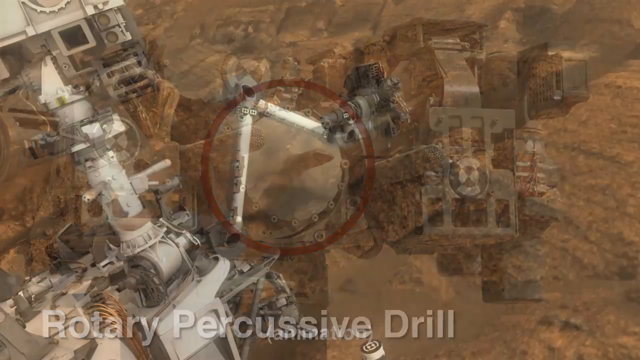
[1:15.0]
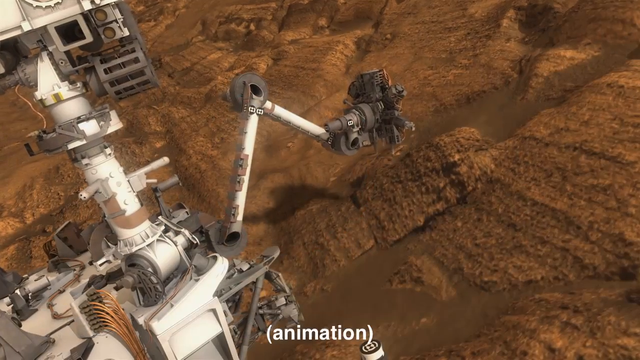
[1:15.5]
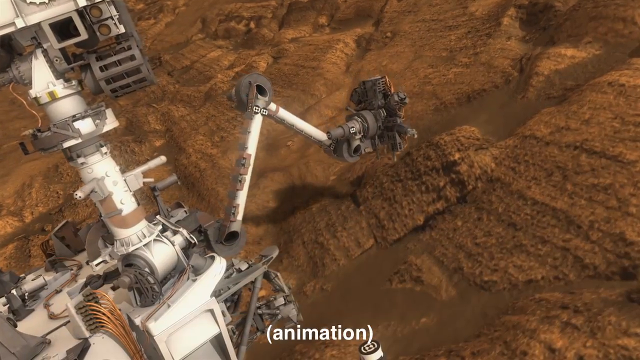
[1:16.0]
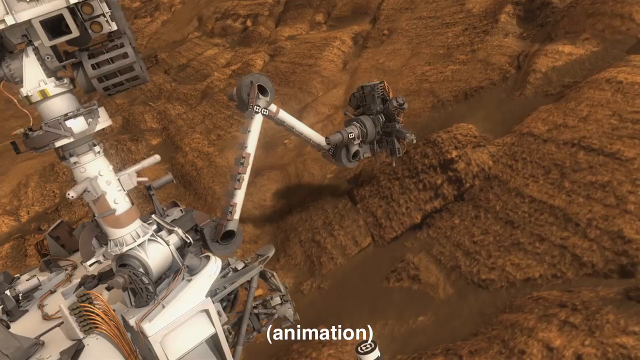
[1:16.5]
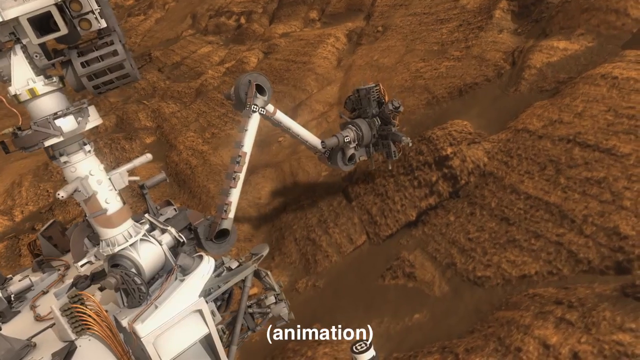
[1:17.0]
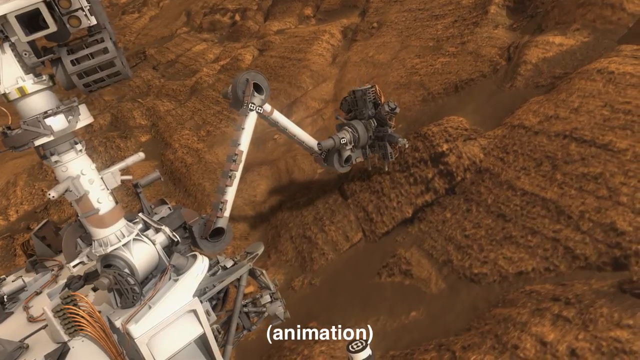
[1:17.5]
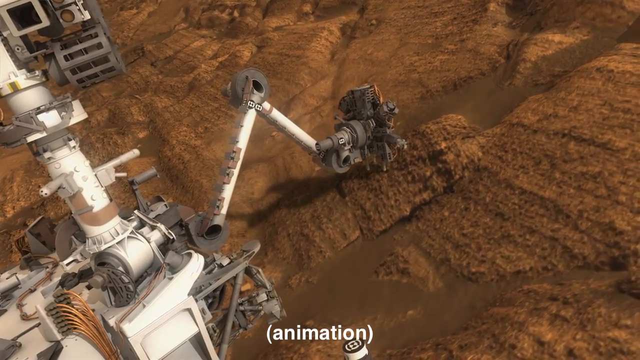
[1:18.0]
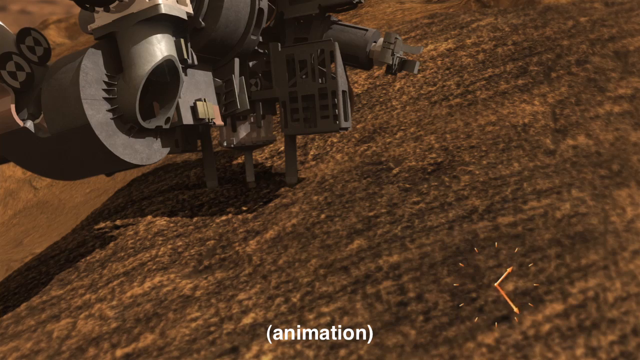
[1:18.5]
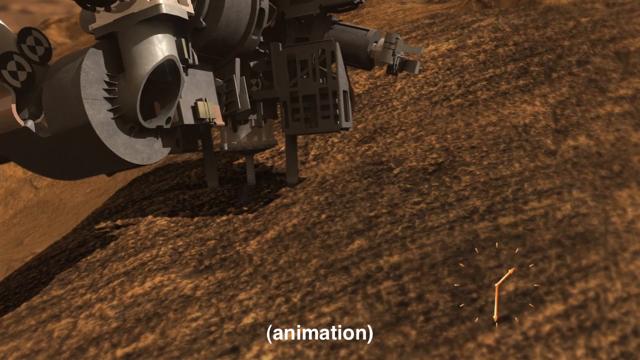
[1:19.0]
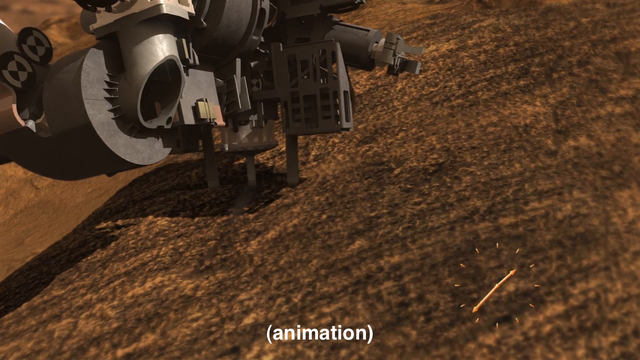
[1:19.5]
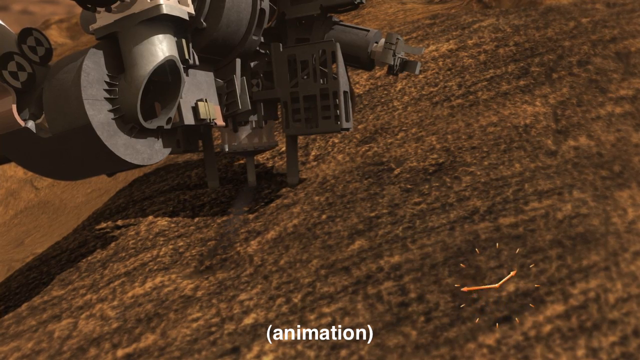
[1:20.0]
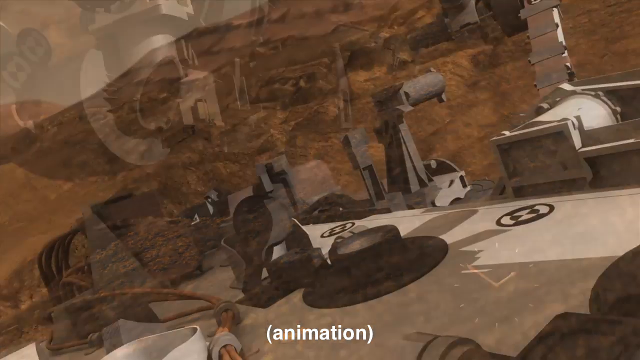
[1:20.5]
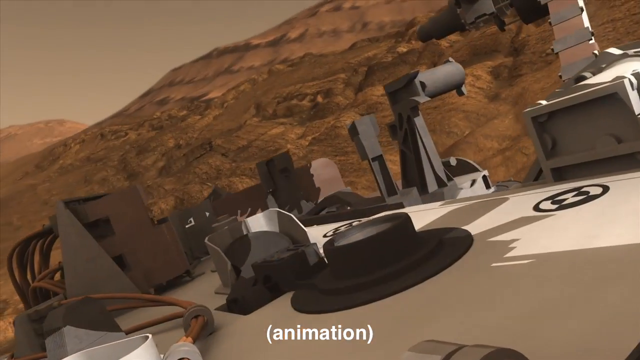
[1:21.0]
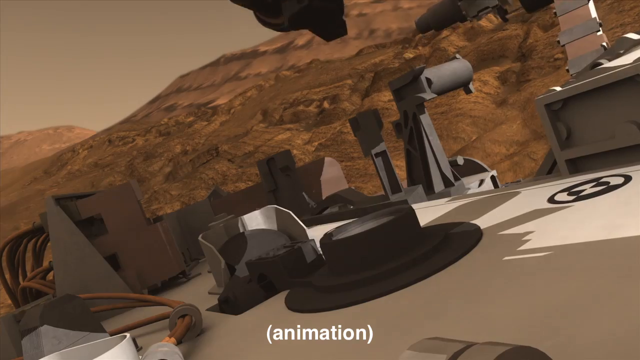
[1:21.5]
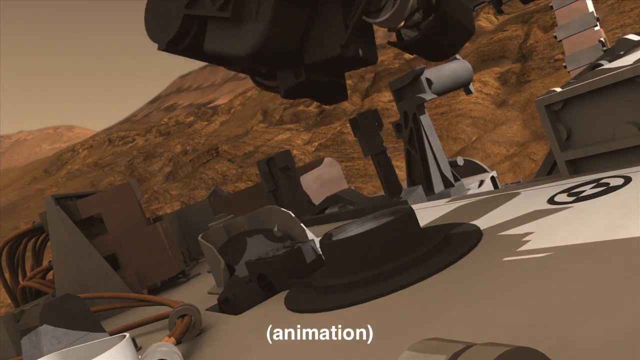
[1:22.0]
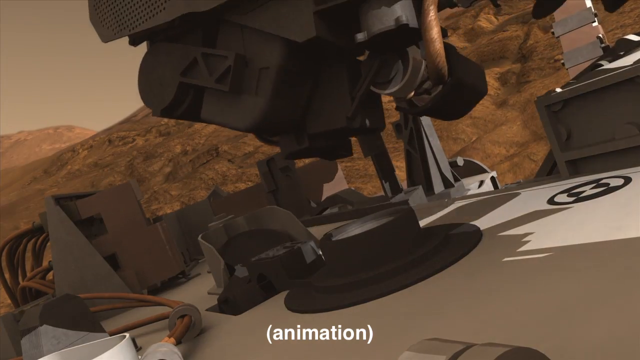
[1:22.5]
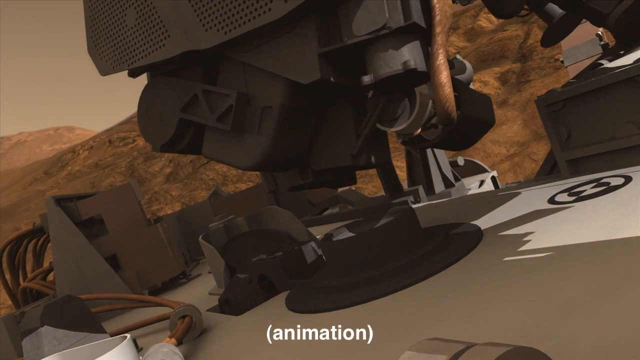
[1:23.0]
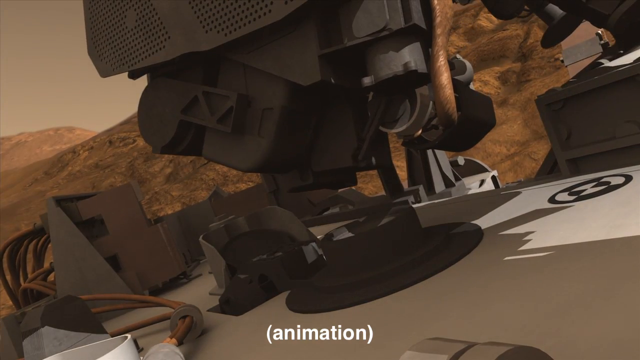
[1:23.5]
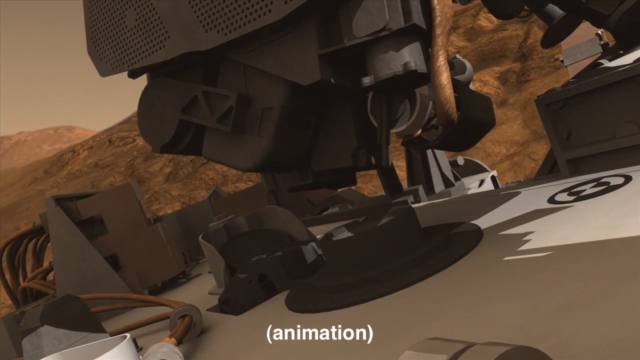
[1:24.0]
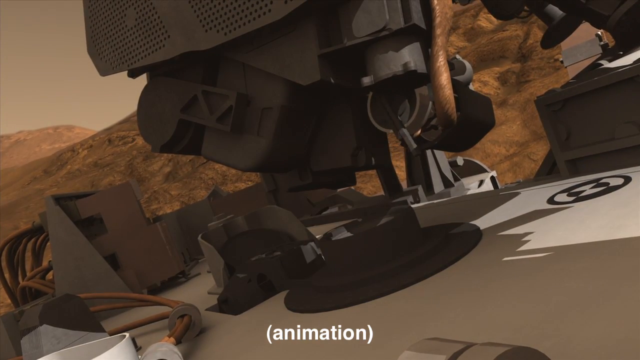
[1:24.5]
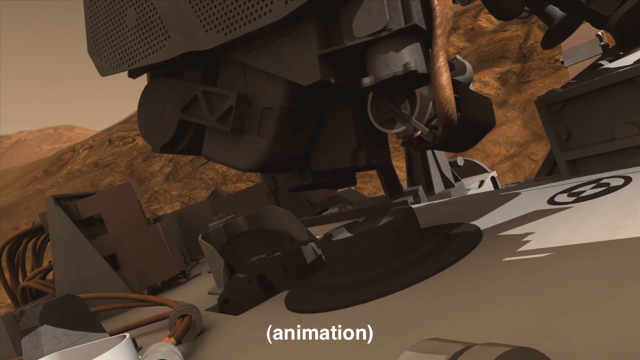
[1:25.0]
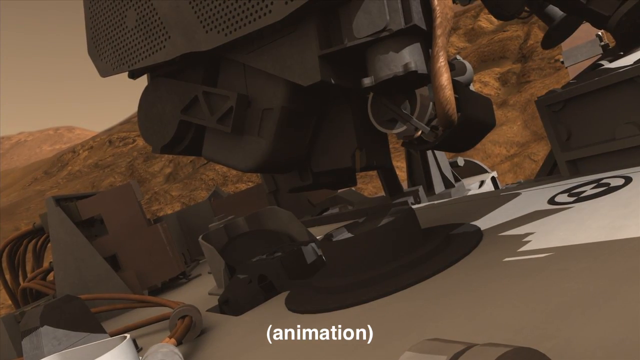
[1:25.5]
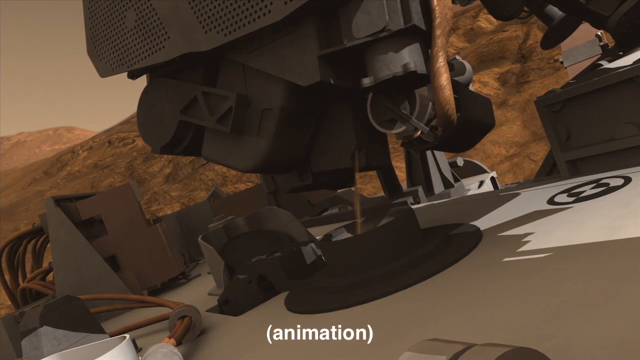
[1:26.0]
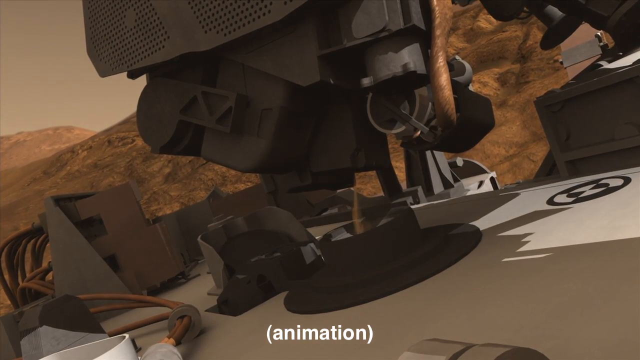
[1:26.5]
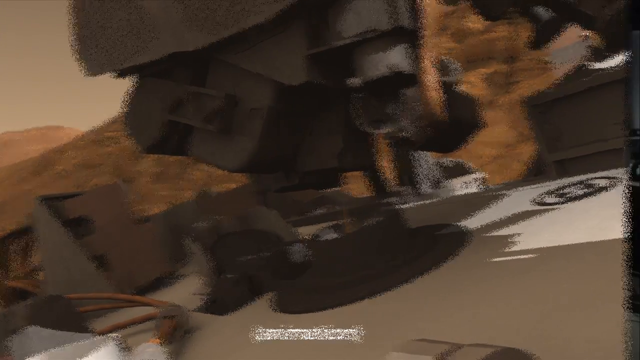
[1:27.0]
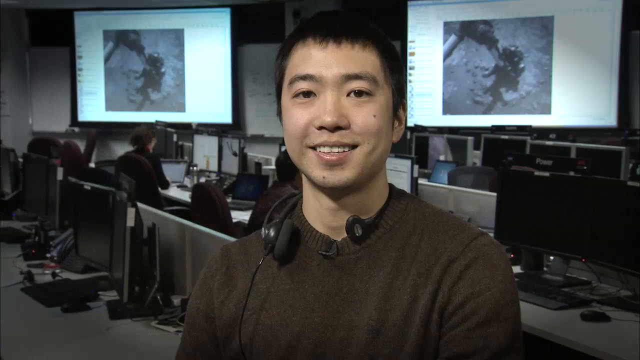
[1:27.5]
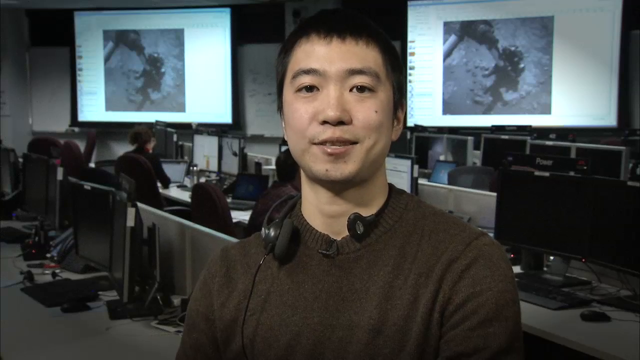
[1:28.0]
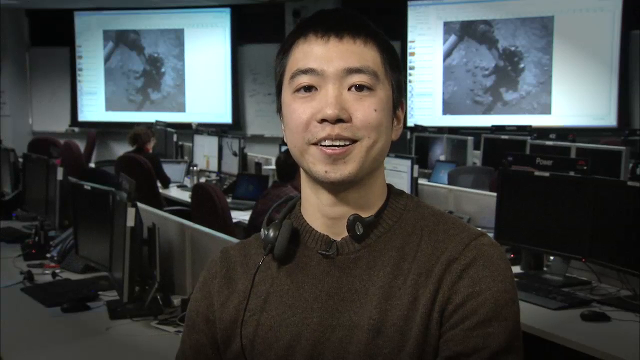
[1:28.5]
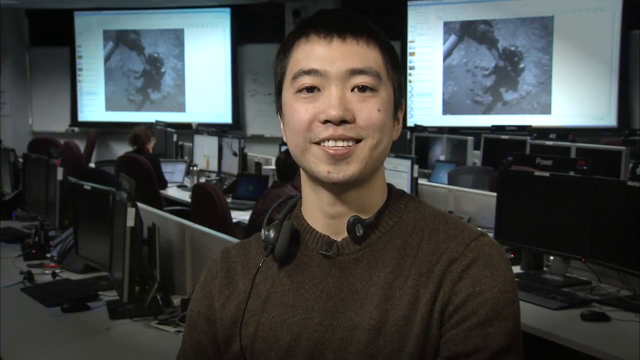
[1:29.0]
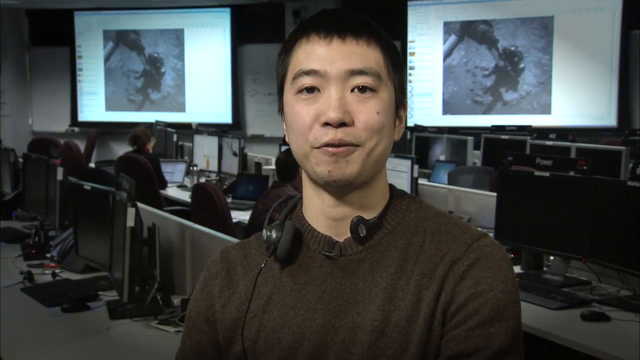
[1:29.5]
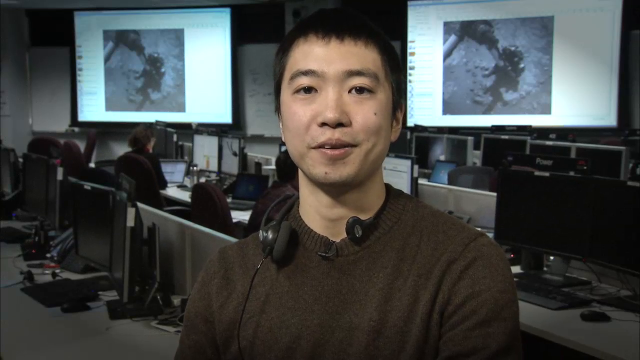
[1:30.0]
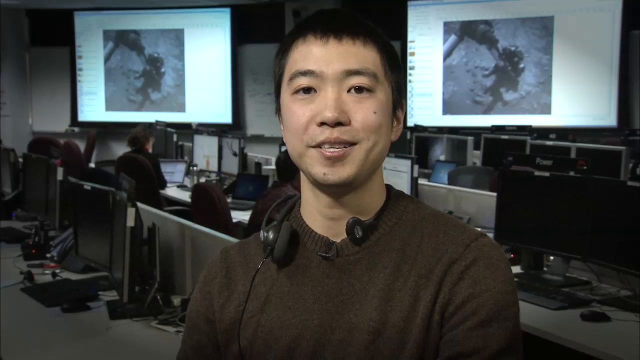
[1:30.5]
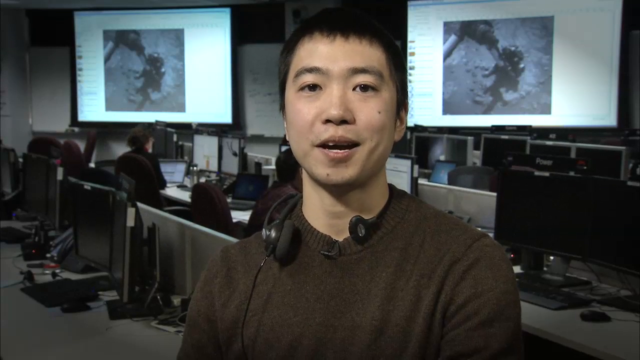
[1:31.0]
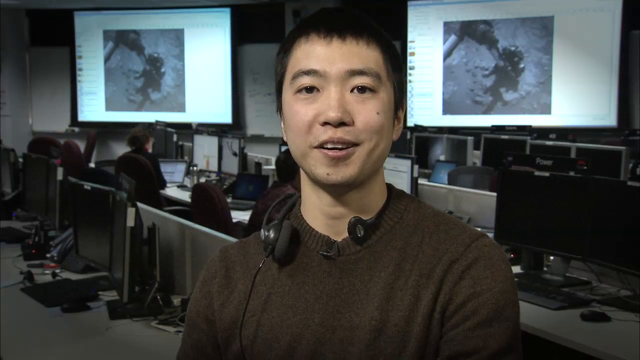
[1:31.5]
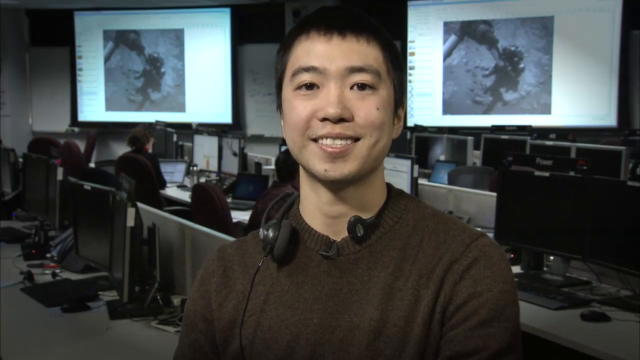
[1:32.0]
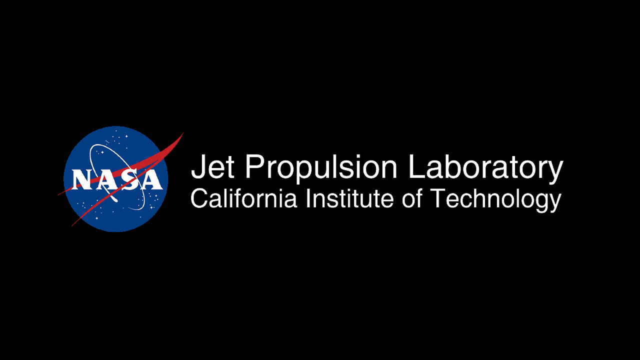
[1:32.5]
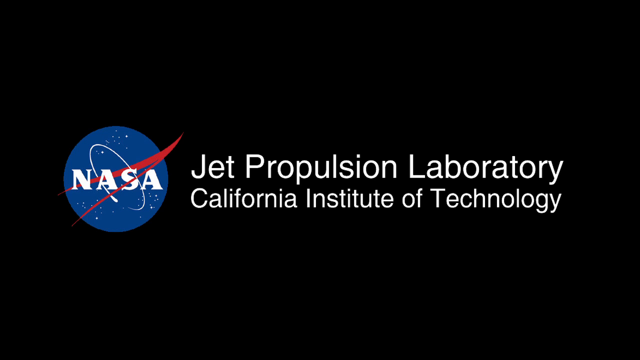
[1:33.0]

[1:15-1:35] Following the rotary percussive drill, an animation shows how the arm of cylinders on the Curiosity rover works: it attaches itself to the surface of Mars, and once the surface is dusted off, the robot collects the sand, sweeping it into a black box that dispenses the sand into the robot. Justin Lin then returns. They are identified as part of NASA's Jet Propulsion Laboratory at the California Institute of Technology.